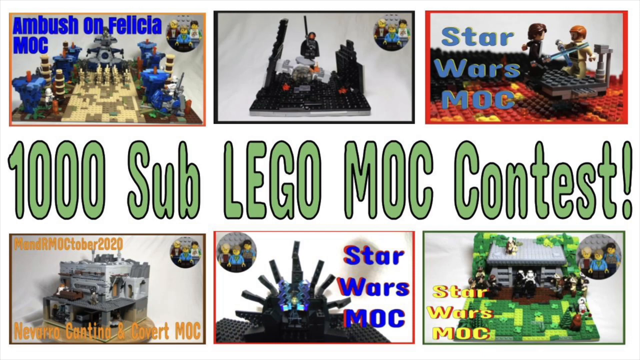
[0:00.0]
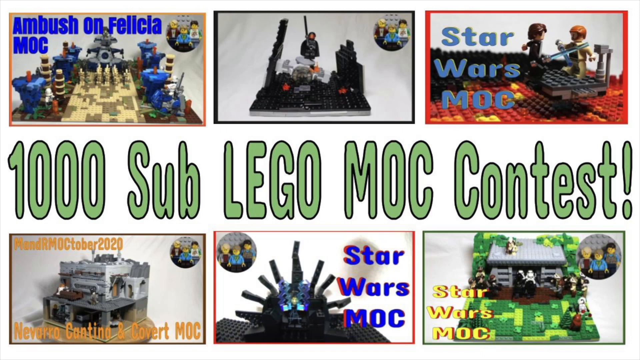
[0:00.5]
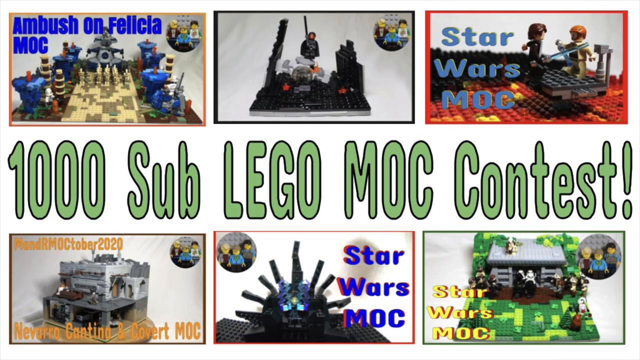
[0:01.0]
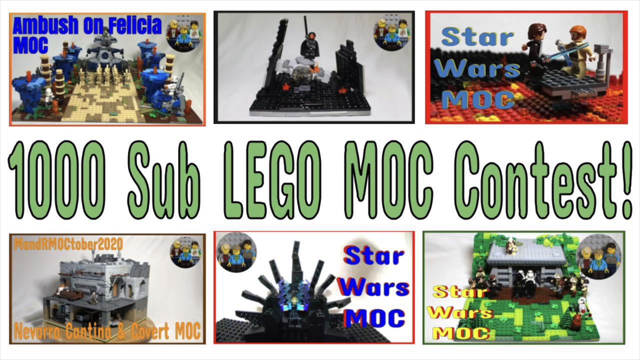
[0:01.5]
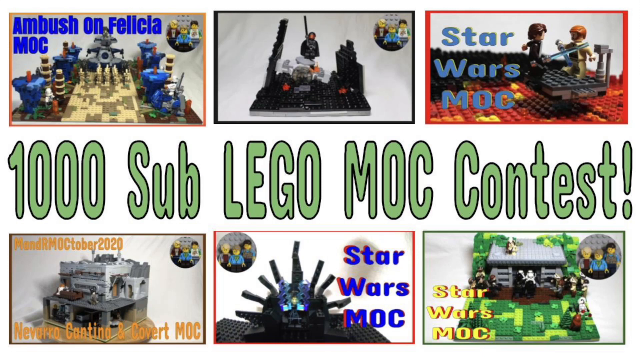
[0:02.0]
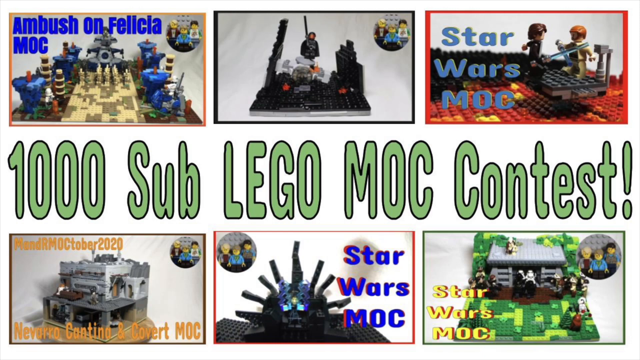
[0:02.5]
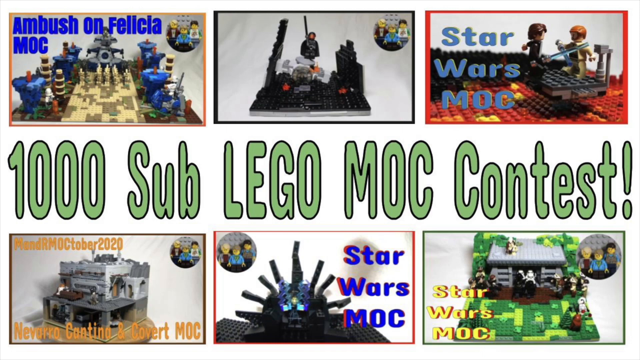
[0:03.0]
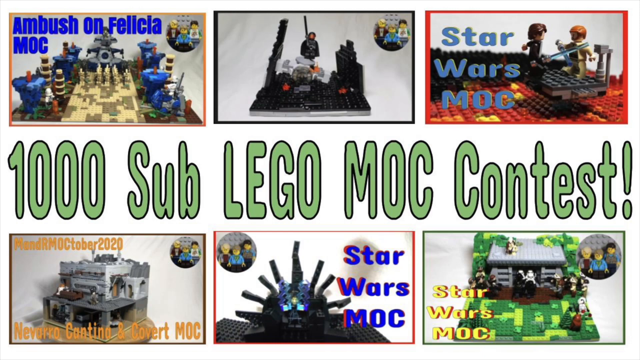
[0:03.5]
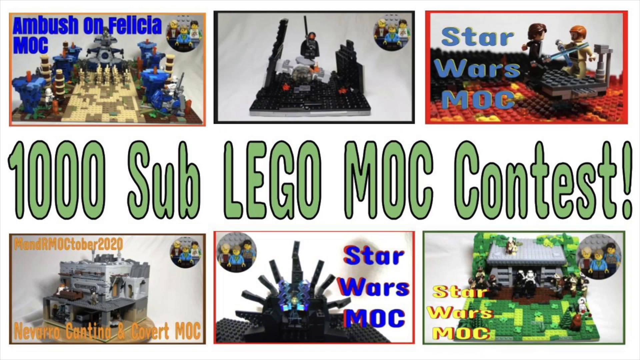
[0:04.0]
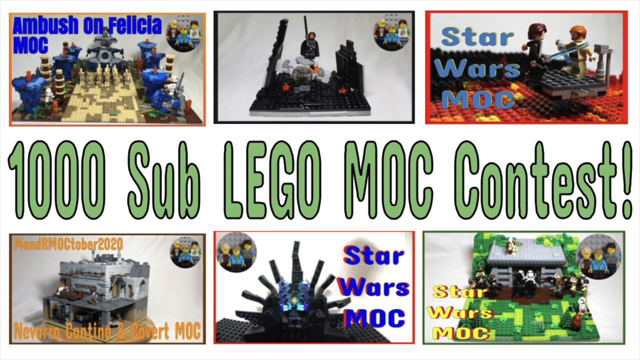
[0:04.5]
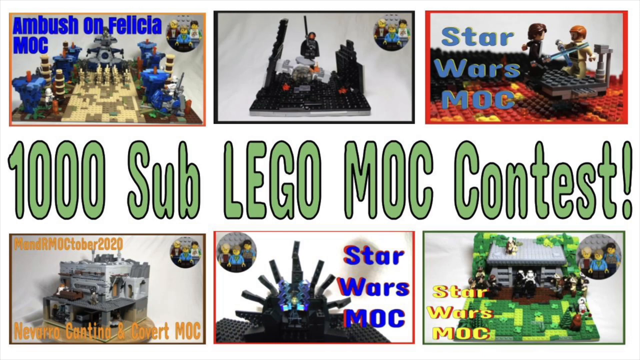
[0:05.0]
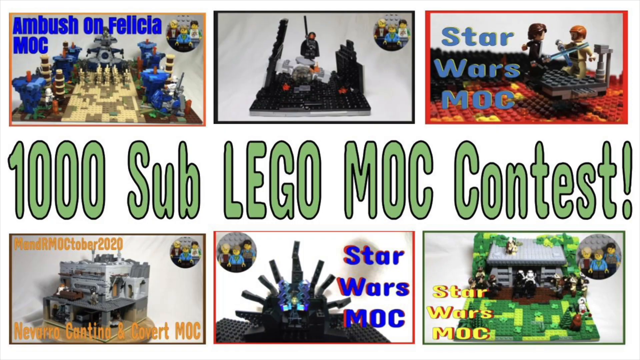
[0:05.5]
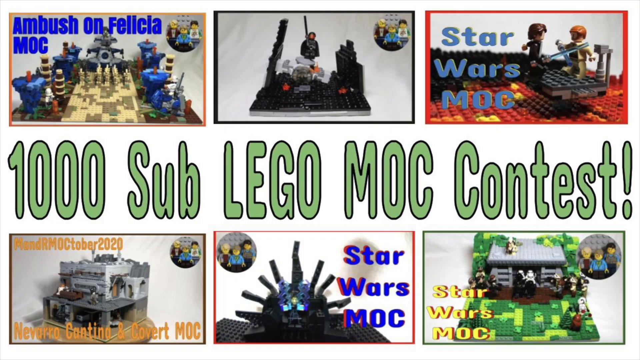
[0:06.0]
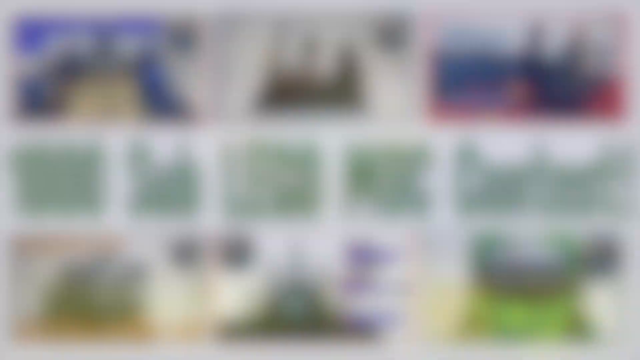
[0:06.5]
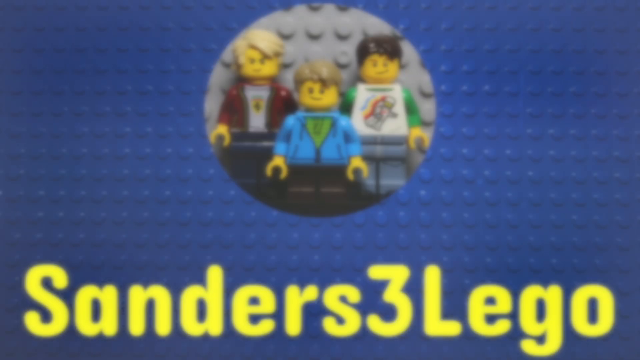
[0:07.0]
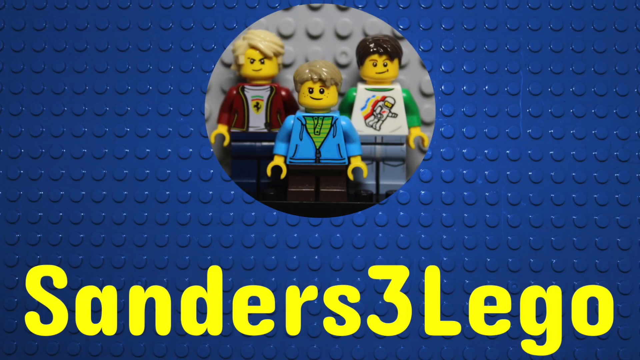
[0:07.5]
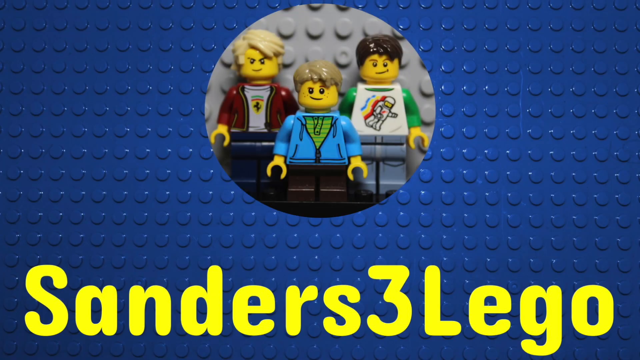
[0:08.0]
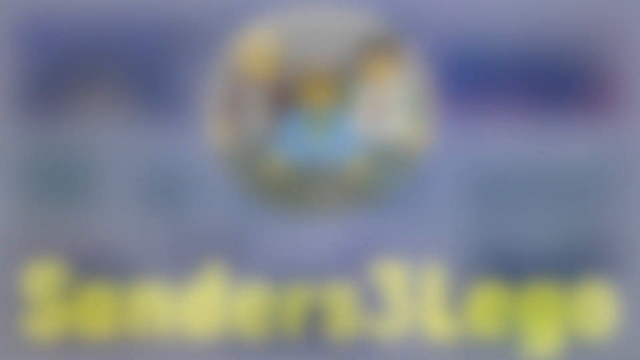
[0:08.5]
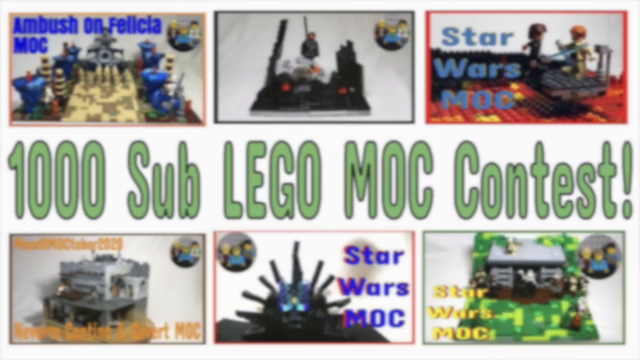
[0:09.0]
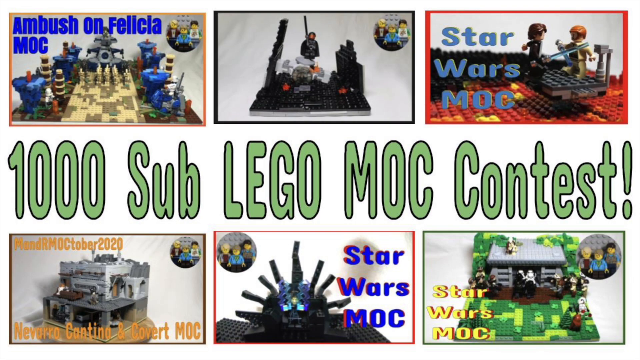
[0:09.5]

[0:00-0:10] The video is titled "1,000 Sub Lego MOC Contest" and appears to be about a Lego contest. The initial screen shows six designs. The top left one is "Ambush on Felicia MOC," which is like a Lego set of that. The middle one looks like some sort of fighting guy Lego set. The top right one is "Star Wars MOC." The bottom left one reads something ending in "October 2020," and the bottom middle one is "Star Wars MOC" as well; a Star Wars theme is the main thing. The screen then transitions into a design that says "Sanders 3 Lego," with three Lego characters on the screen against a blue backdrop.